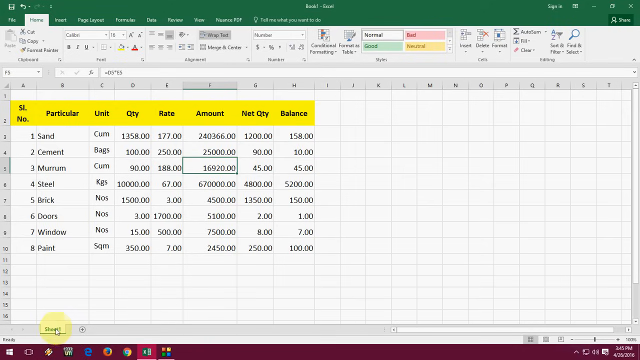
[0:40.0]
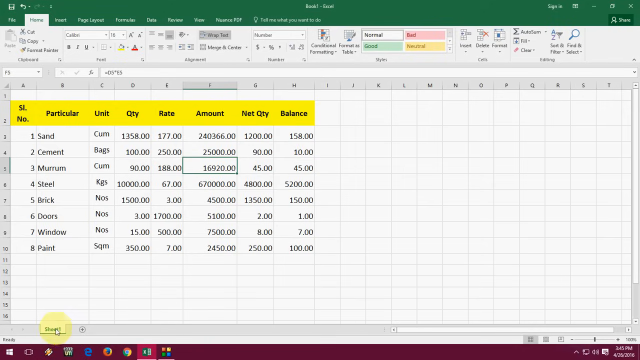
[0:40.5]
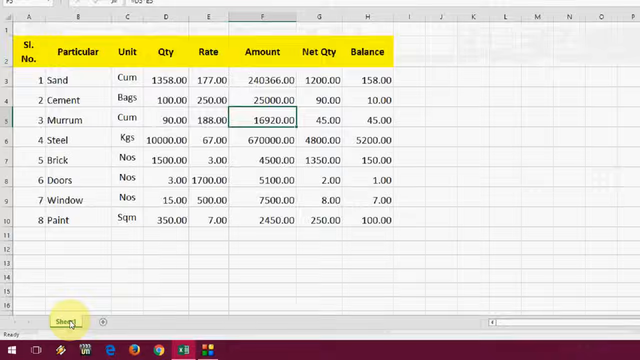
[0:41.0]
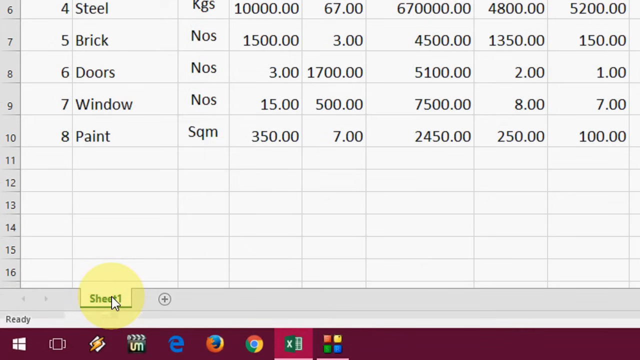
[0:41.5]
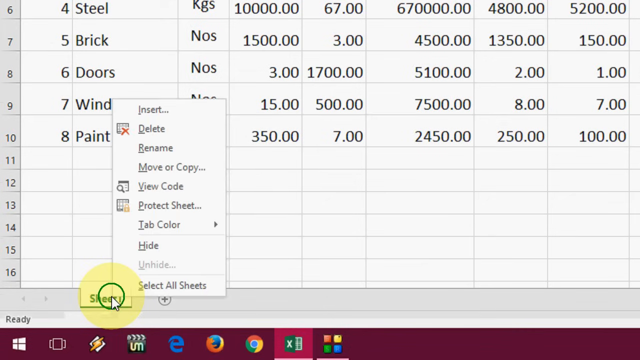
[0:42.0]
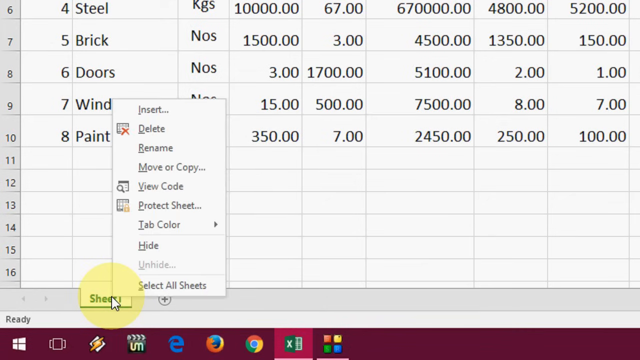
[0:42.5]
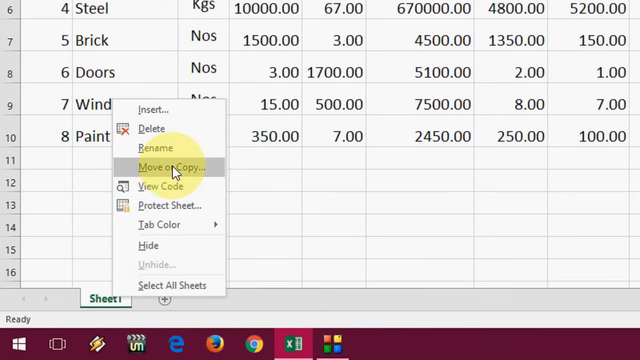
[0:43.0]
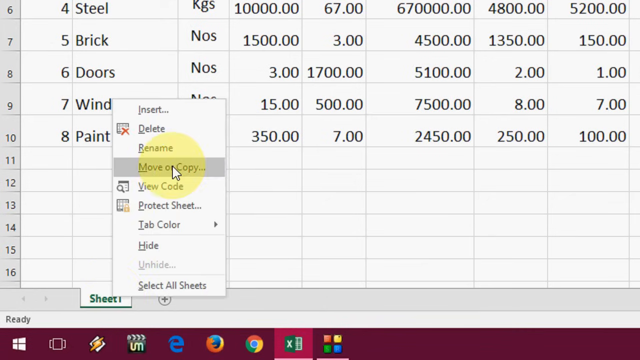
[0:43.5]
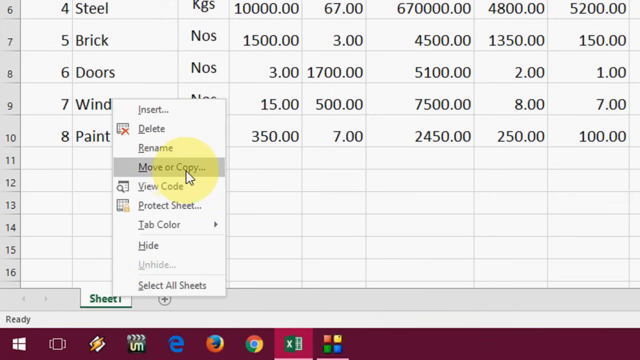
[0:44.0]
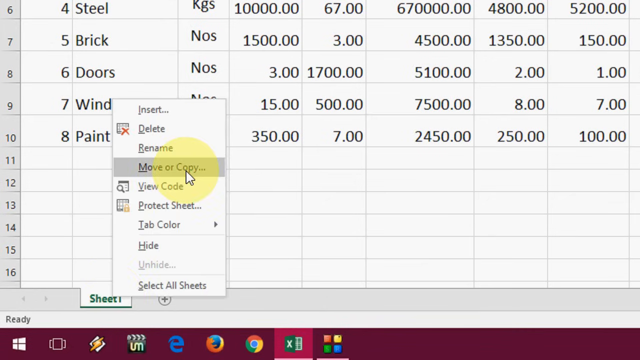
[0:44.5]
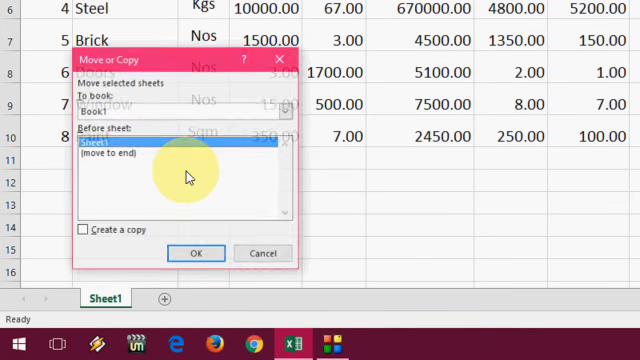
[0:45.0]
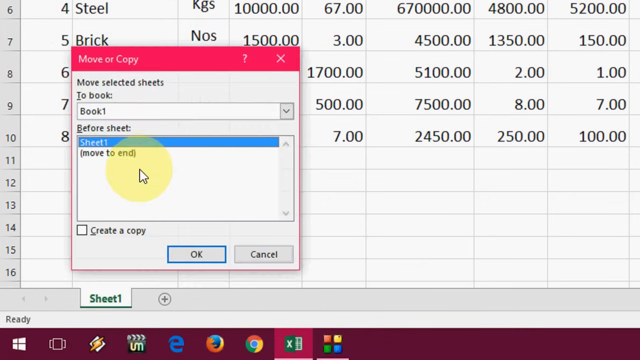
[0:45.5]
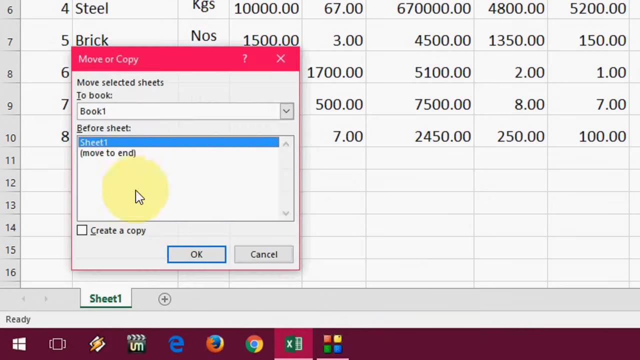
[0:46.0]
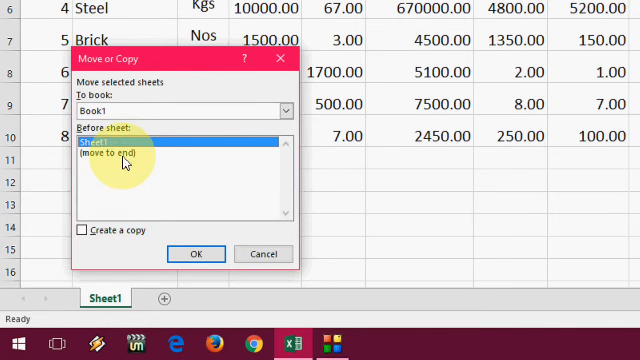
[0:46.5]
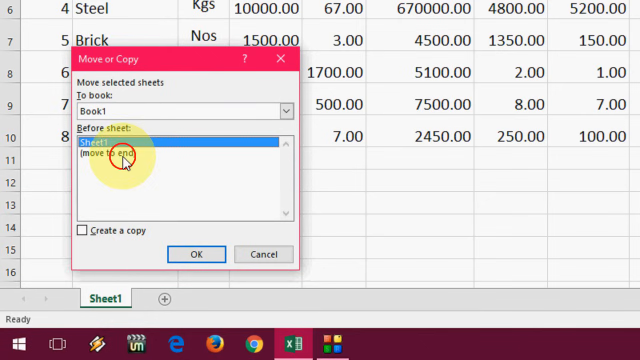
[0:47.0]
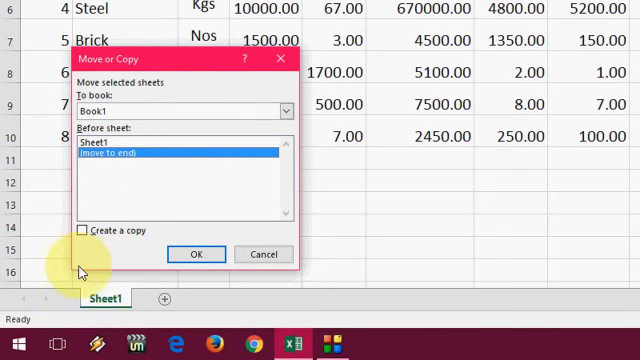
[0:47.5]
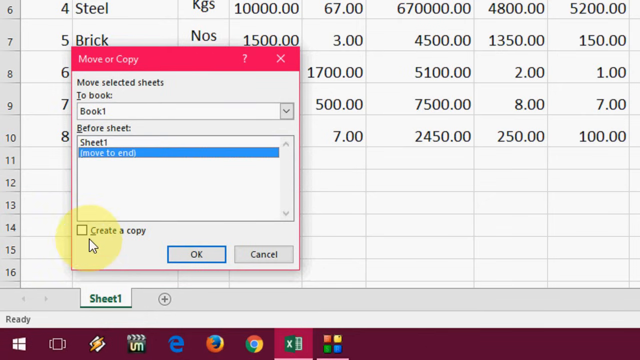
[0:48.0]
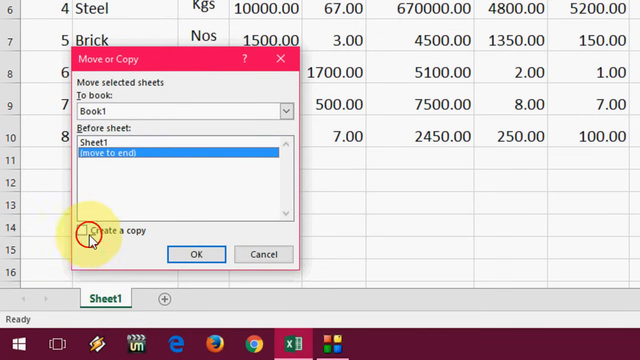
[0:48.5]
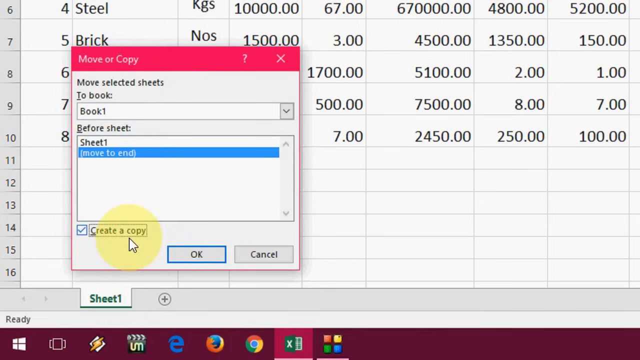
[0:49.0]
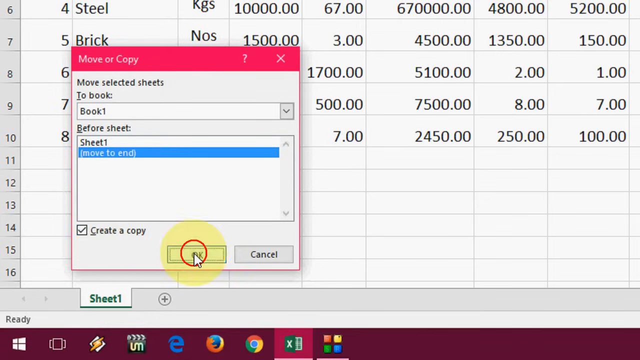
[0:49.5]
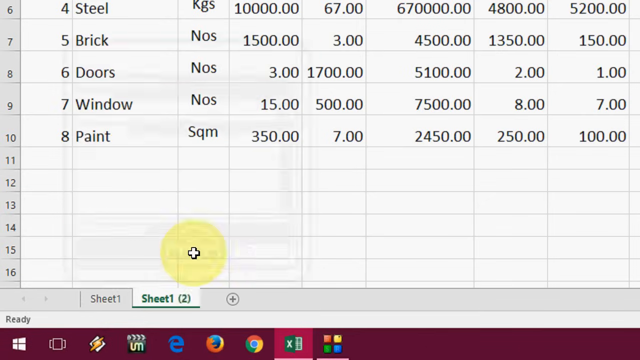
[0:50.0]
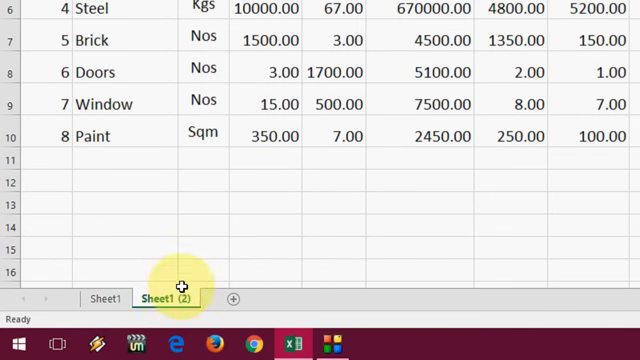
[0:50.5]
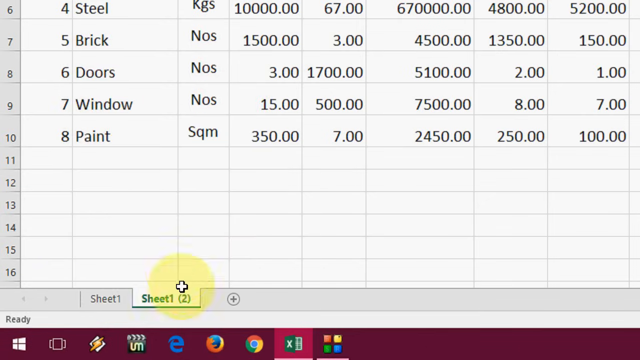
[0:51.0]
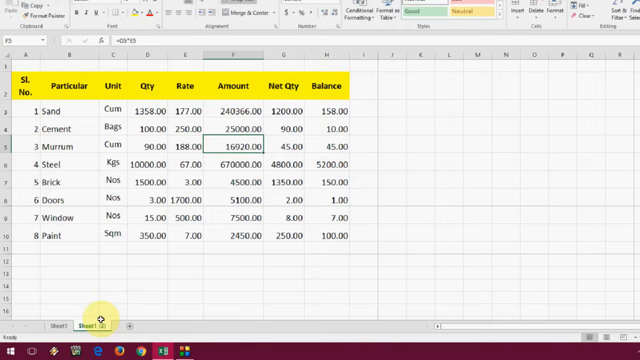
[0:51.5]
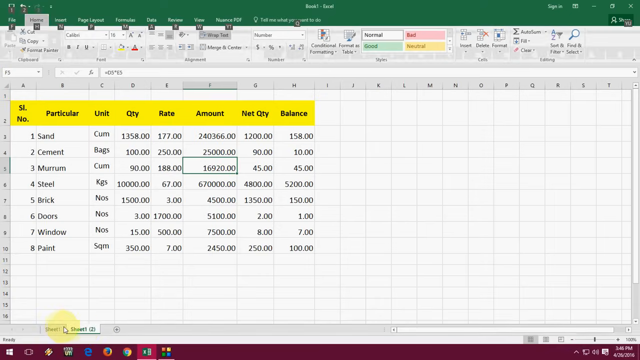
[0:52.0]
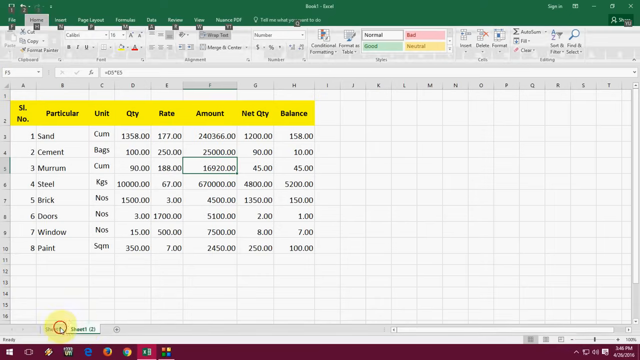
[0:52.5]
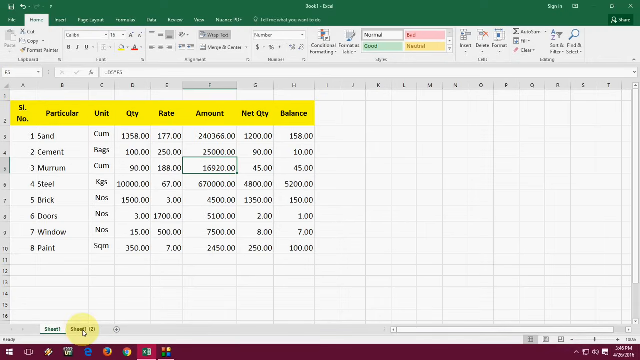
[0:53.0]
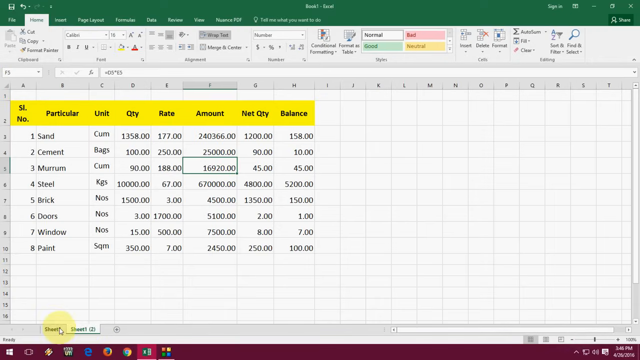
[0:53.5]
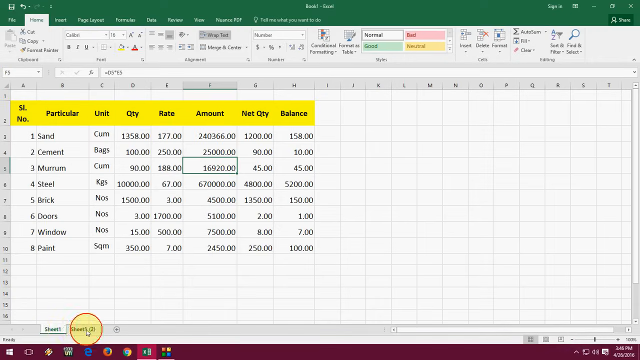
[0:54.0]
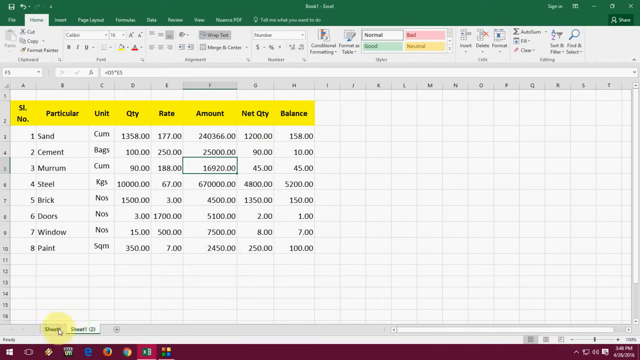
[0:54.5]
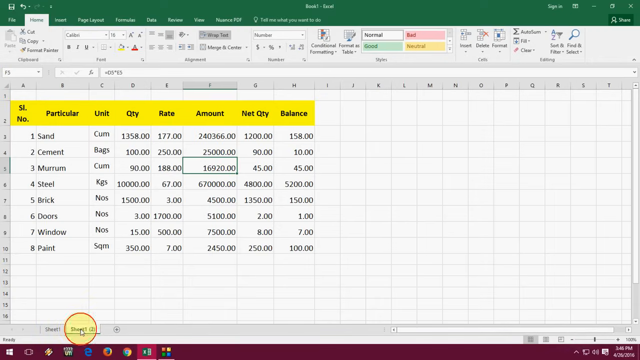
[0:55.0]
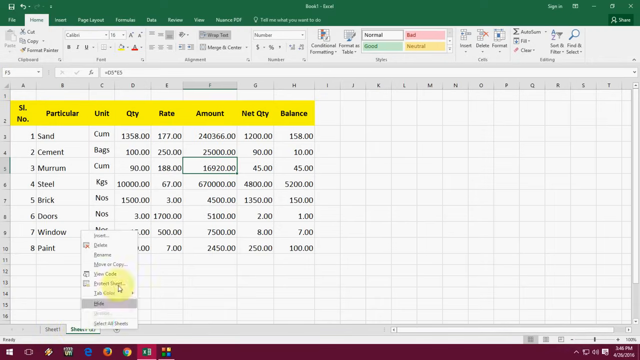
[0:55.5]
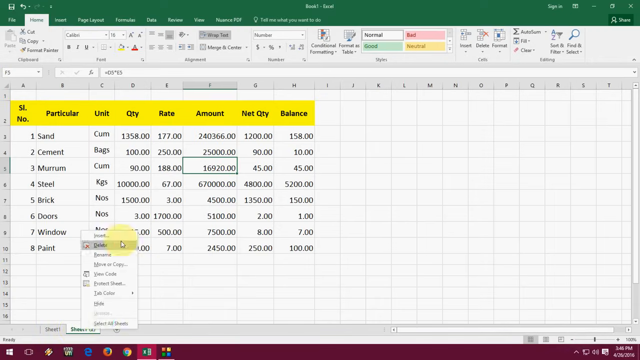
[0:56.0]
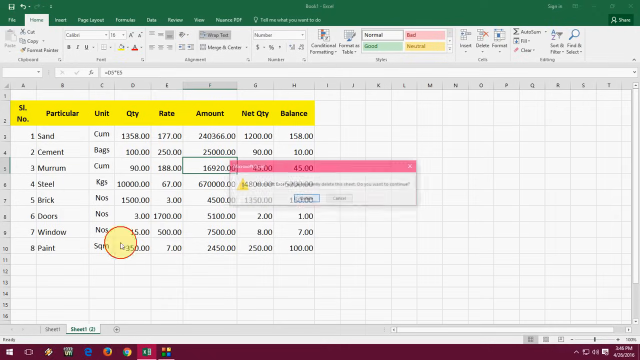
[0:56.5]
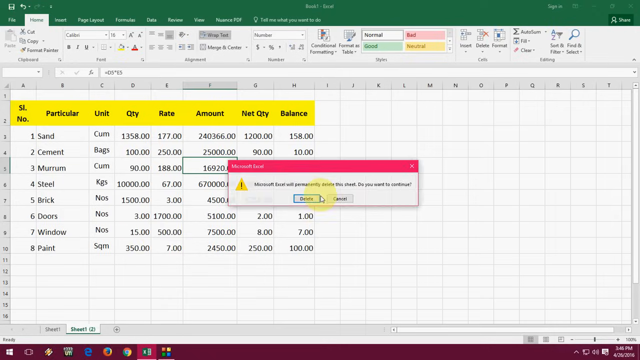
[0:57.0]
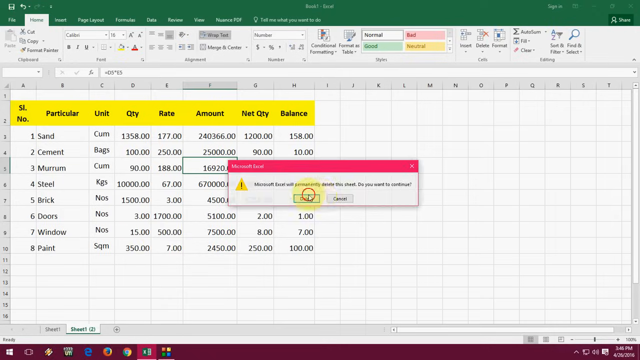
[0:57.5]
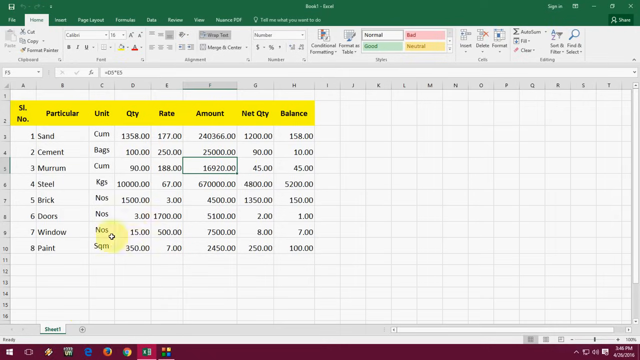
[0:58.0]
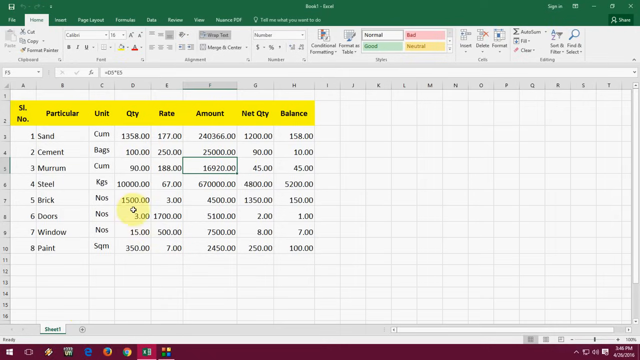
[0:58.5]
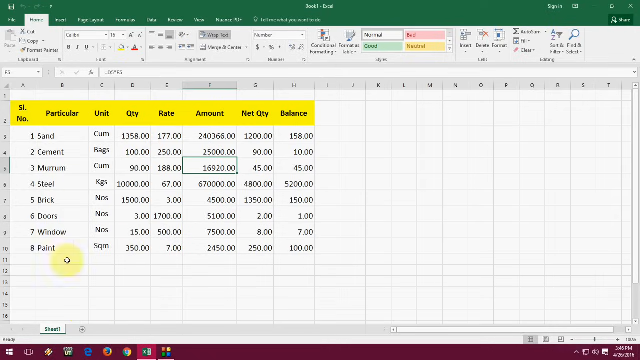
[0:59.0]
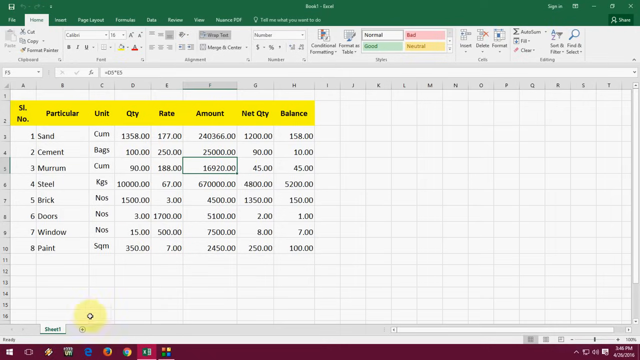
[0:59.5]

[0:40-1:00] The video now shows some kind of data entry program with a green border at the top; the menu area there is too blurry to read. Black text in the data entry rows reads: SL number 1, sand, unit CUM, quantity 1358.00, rate 177.00, amount 240366.00, net quantity 1200.00, balance 158.00. SL number 2, cement, unit bags, quantity 100, rate 250, amount 25000.00, net quantity 90.00, balance 10.00. Number 3, with an unreadable item name, unit CUM, quantity 90, rate 188.00, amount 16920.00, net quantity 45.00, balance 45.00. Number 4, steel, unit KGS, quantity 10,000.00, rate 67.00, amount 670,000.00, net quantity 4,800.00, balance 5,200.00. SL number 5, brick, unit NOS, quantity 1,500.00, rate 3.00, amount 4,500.00, net quantity 1,350.00, balance 150.00. SL number 6, doors, unit NOS, quantity 3.00, rate 1700.00, amount 5100.00, net quantity 2.00, balance 1.00.